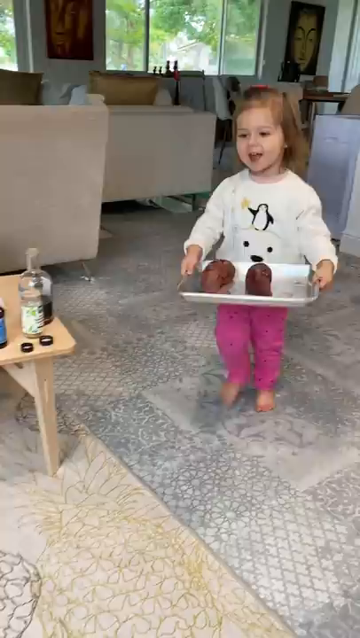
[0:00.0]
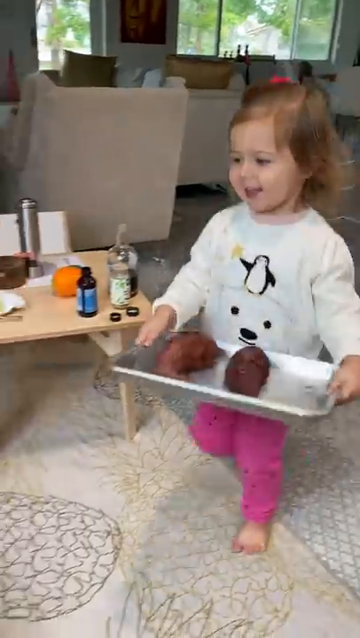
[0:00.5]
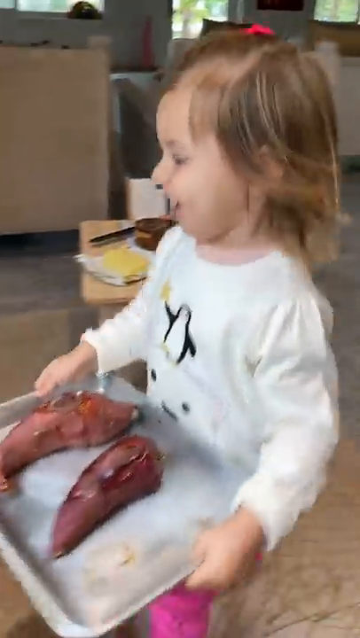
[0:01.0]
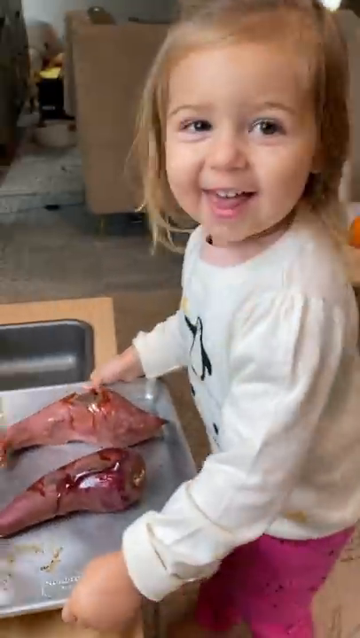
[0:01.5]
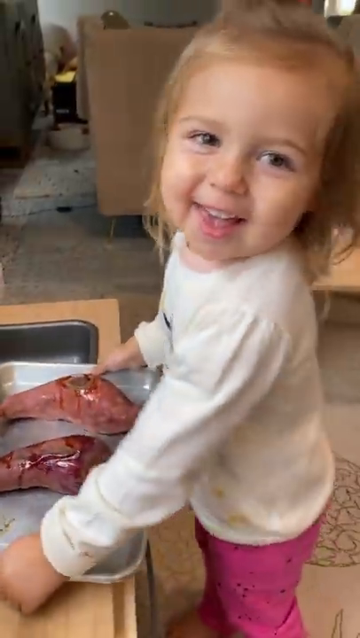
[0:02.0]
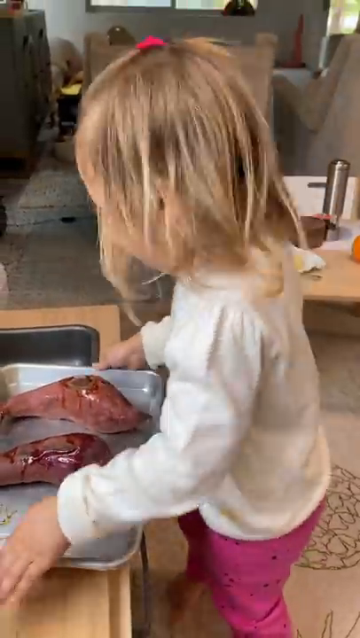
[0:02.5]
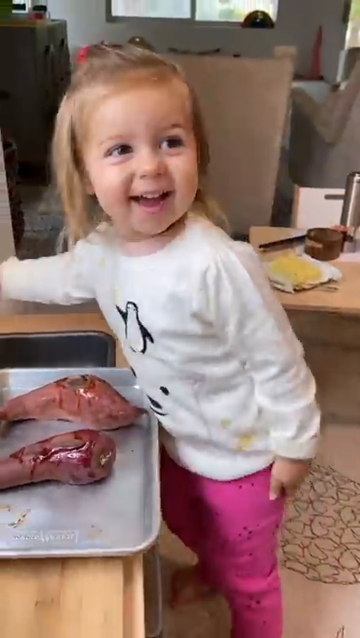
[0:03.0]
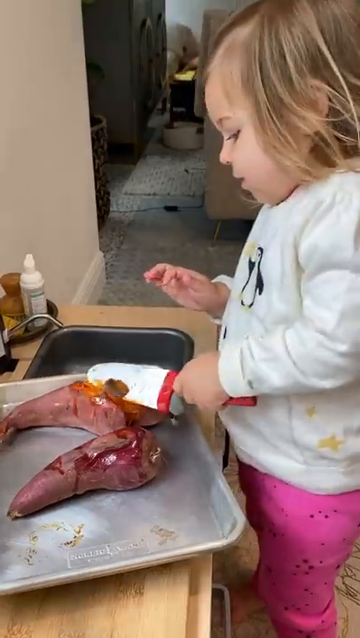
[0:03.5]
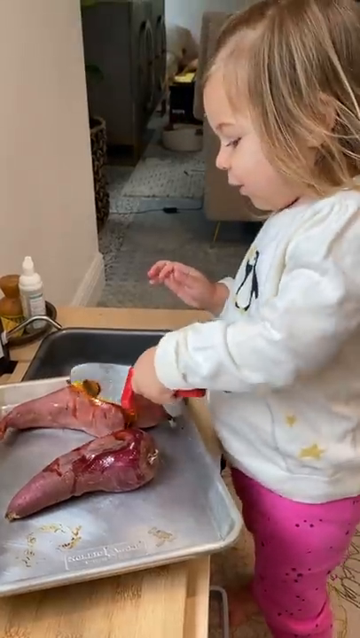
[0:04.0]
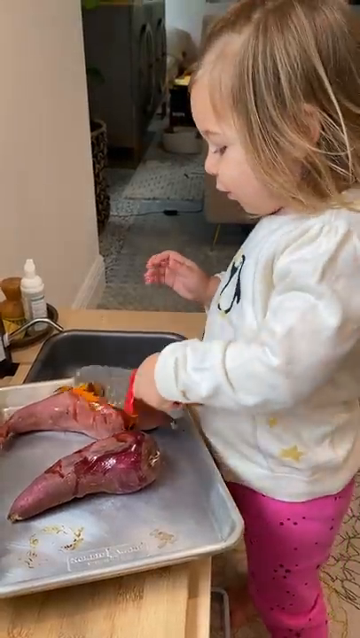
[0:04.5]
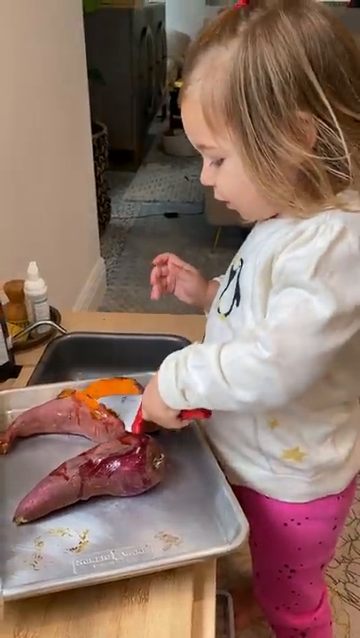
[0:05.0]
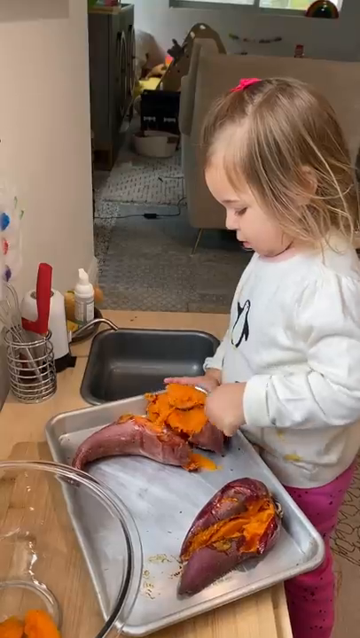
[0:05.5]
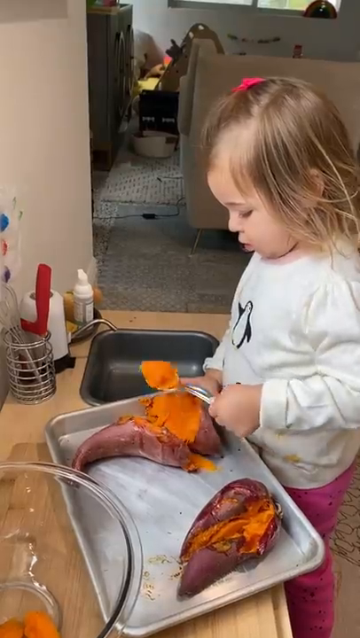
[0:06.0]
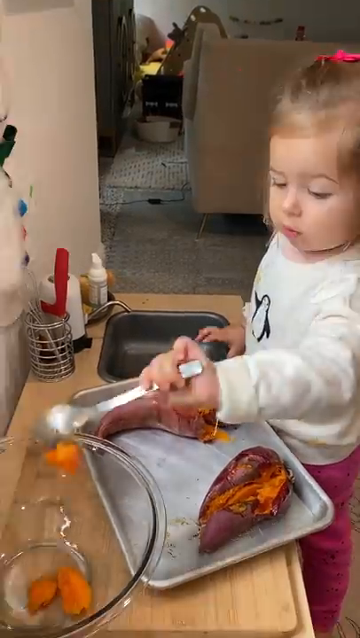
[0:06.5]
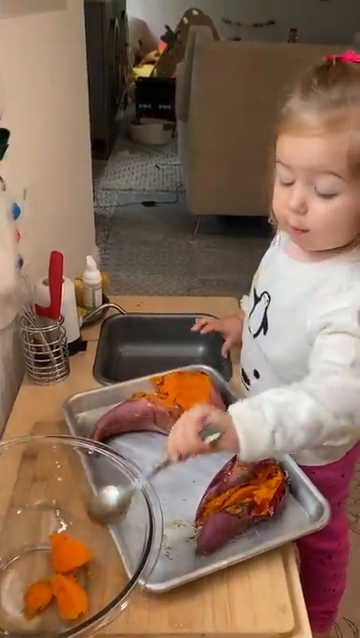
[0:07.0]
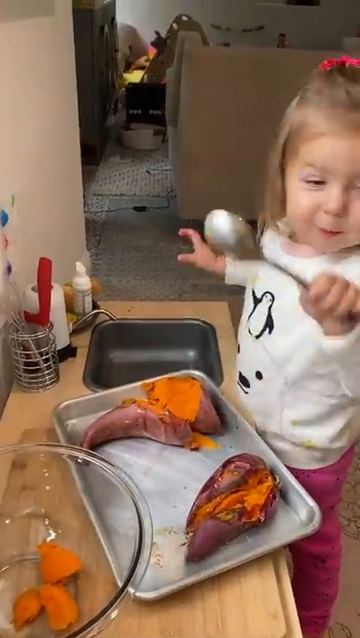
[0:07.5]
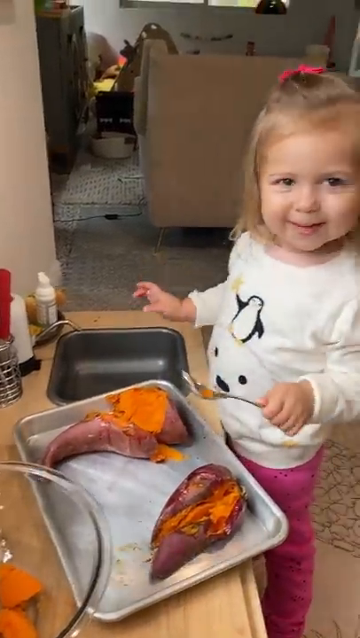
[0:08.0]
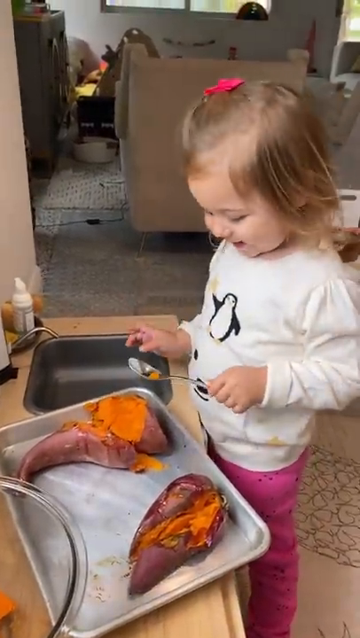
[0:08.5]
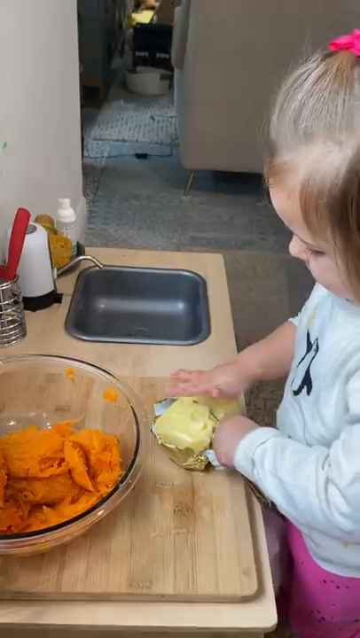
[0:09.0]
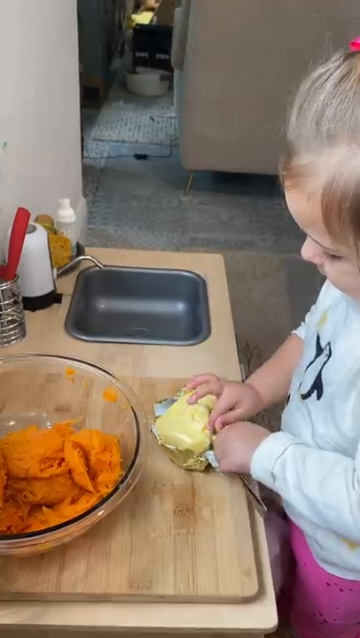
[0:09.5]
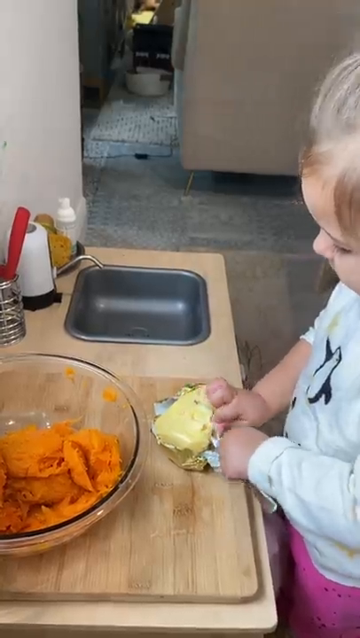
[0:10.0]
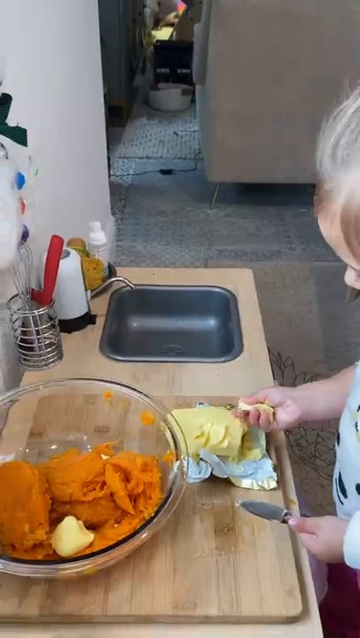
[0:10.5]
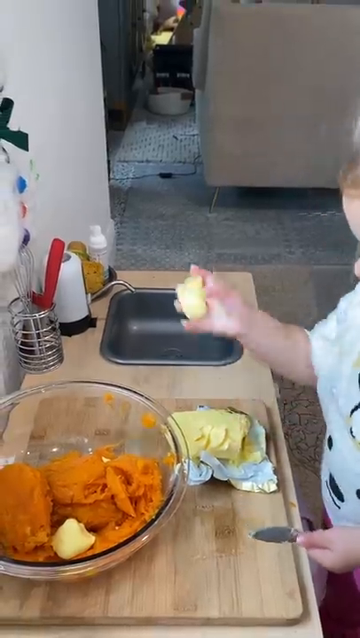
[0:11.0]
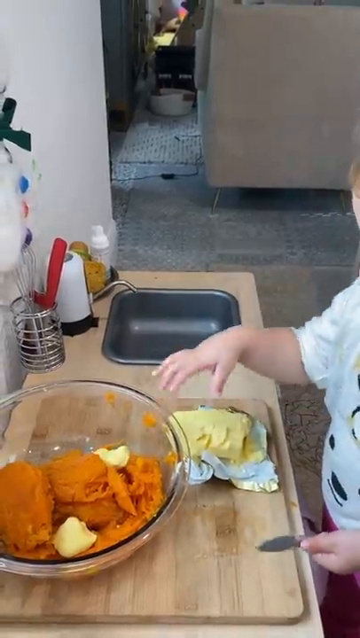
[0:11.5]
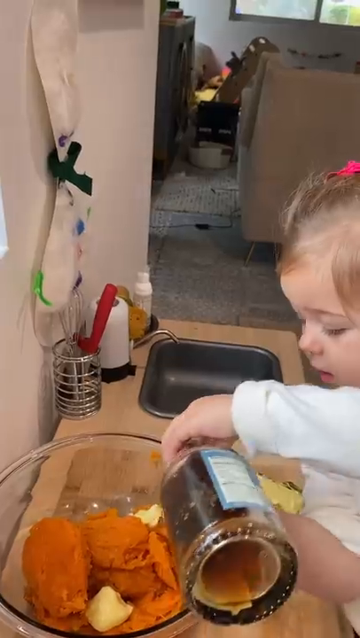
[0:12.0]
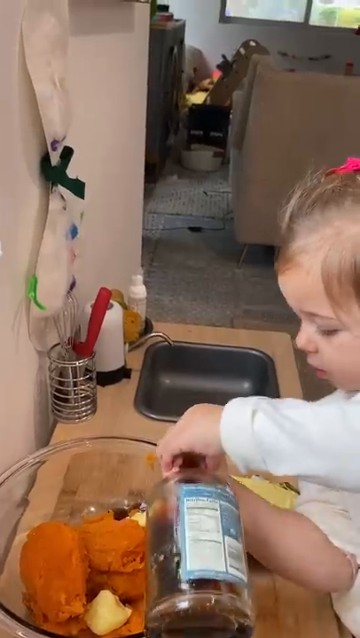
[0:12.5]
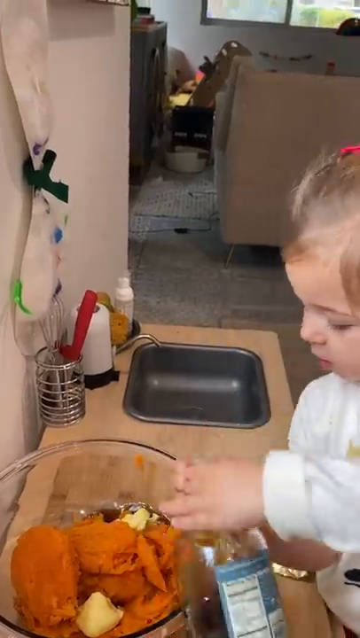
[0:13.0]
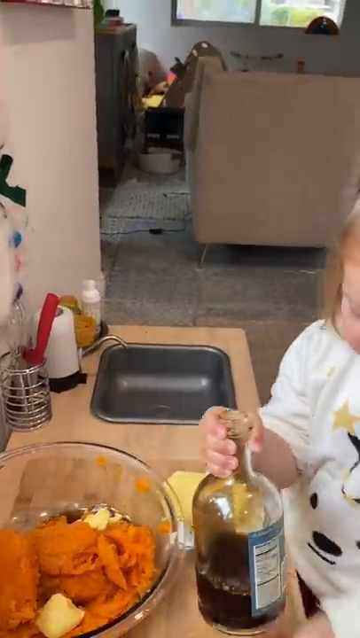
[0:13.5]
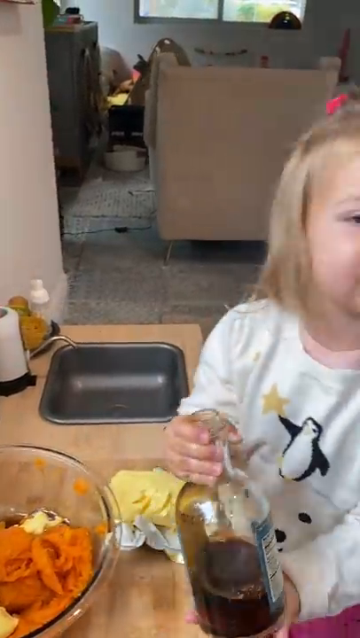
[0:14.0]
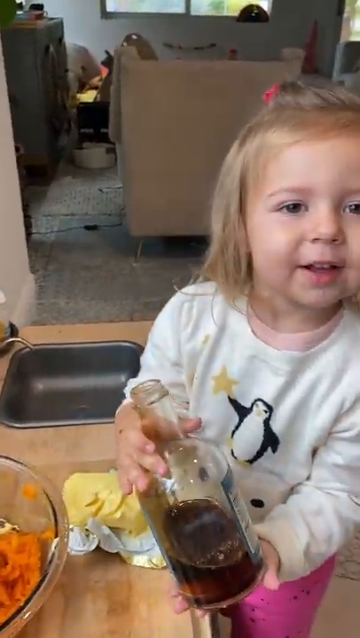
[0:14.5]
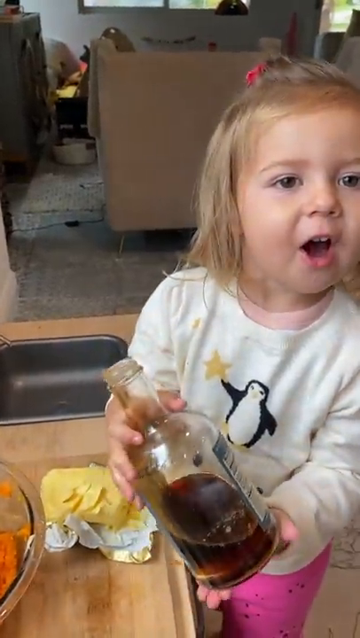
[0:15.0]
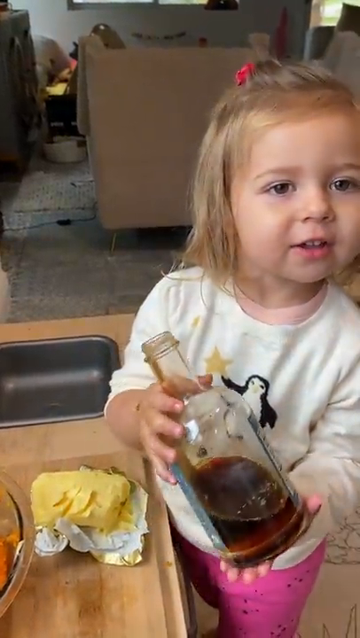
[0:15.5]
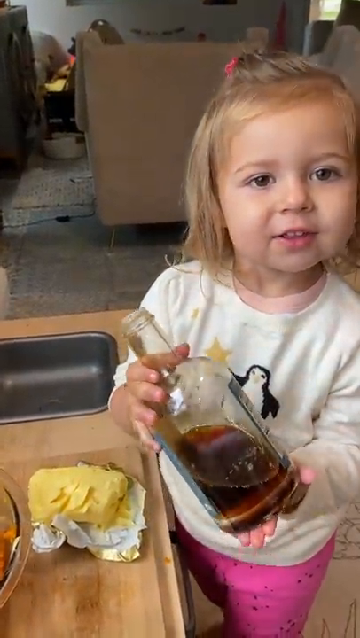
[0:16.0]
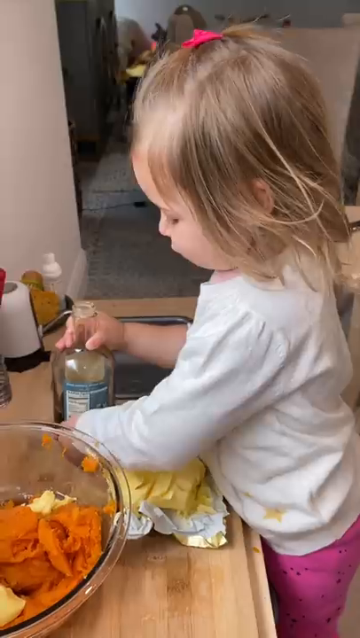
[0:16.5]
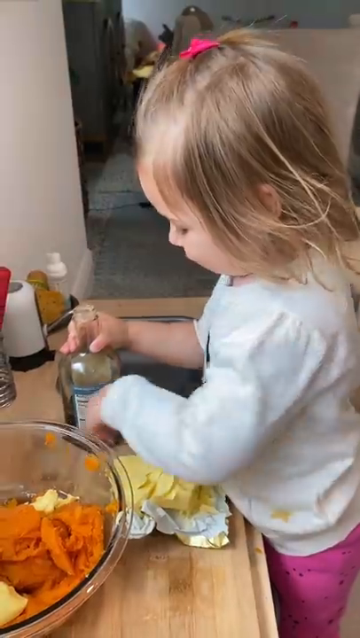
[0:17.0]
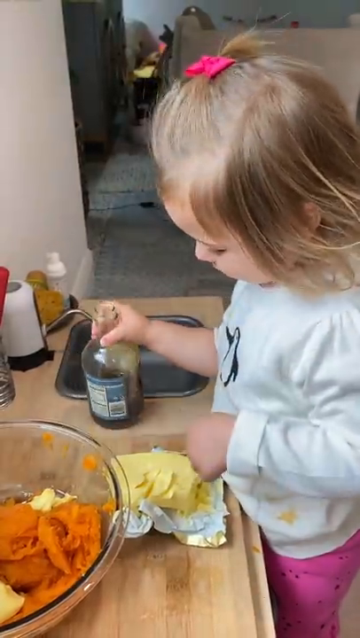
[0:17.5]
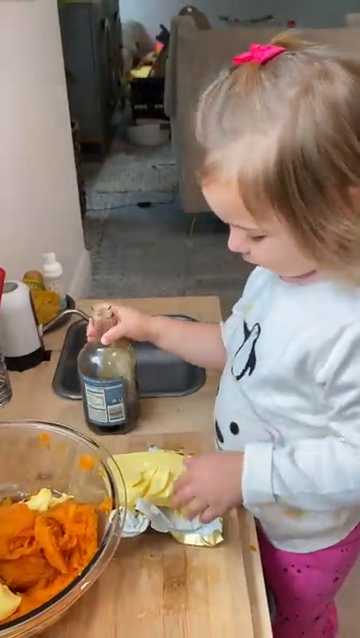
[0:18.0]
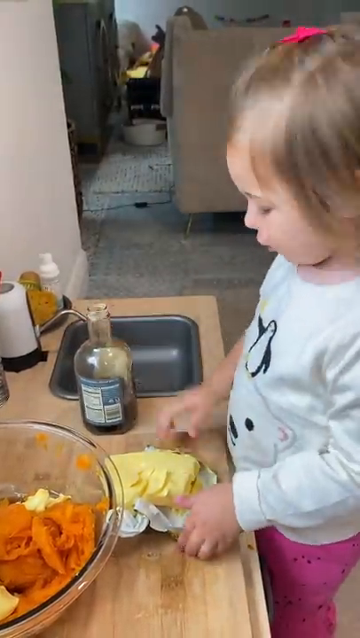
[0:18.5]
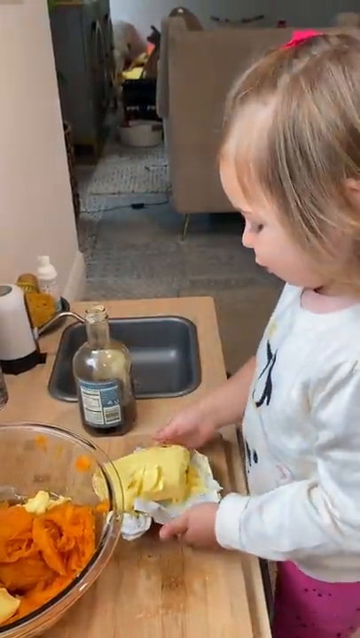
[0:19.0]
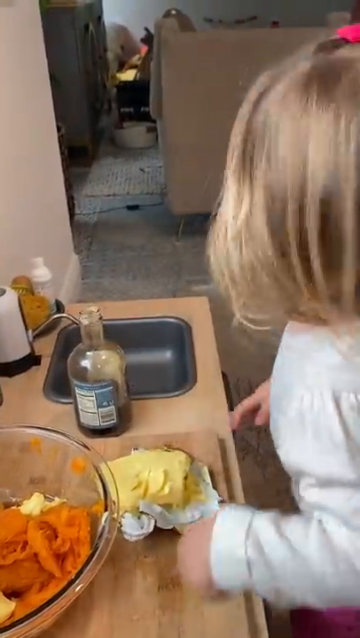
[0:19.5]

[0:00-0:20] A little girl, a toddler, runs into the room holding a pan with two giant sweet potatoes on it. She wears pink pants, a white shirt with a lamb on it, and a pink or red ribbon in her hair, and she is very happy. She has a little low sink and a countertop that are her size. The sweet potatoes look like they are already cooked, and they look like garnet yams, with very dark burgundy skin and an inside that is very red, like an orange-y color. She kind of cuts them in half and scoops them out, using a little knife and a spoon, then adds butter and maple syrup. The butter is a big thing of butter on silver foil; she works it with another little knife, kind of cutting it and blopping it in with her hands. The maple syrup is in a thick glass bottle.